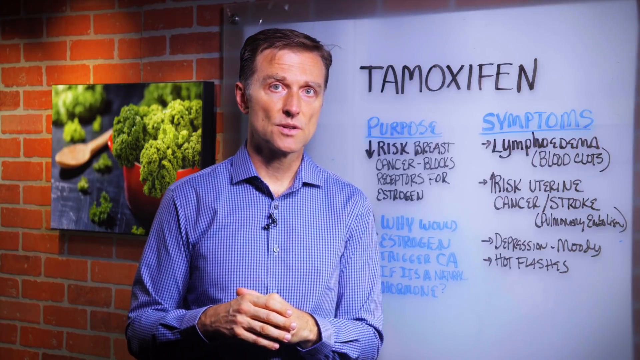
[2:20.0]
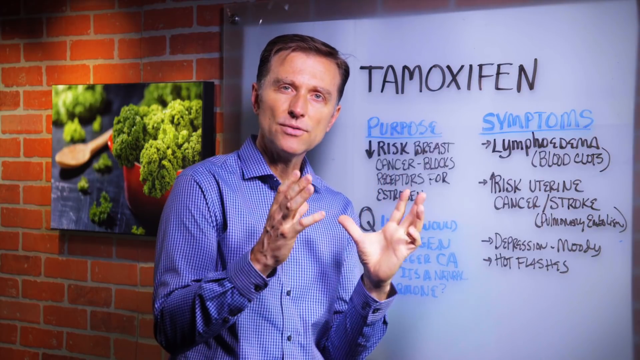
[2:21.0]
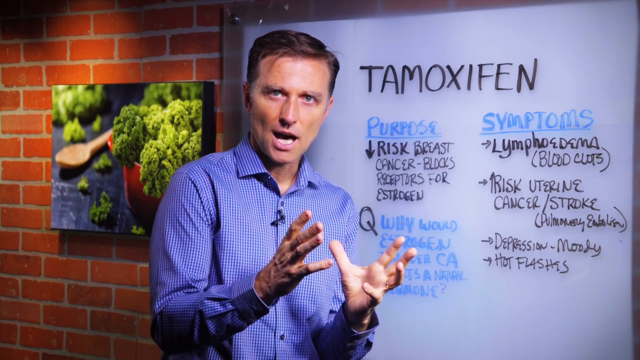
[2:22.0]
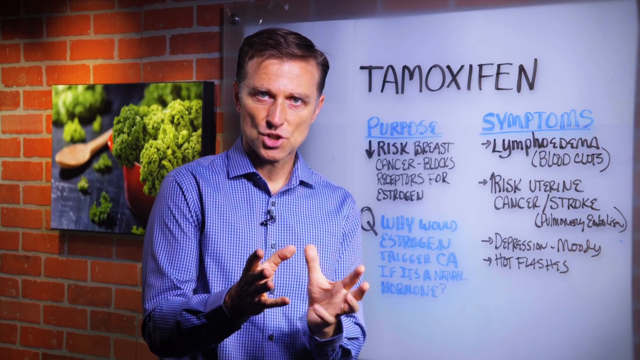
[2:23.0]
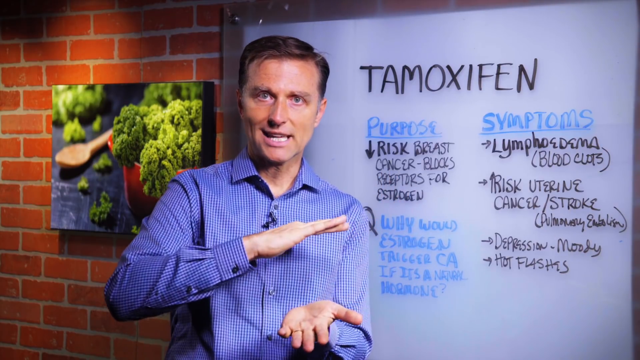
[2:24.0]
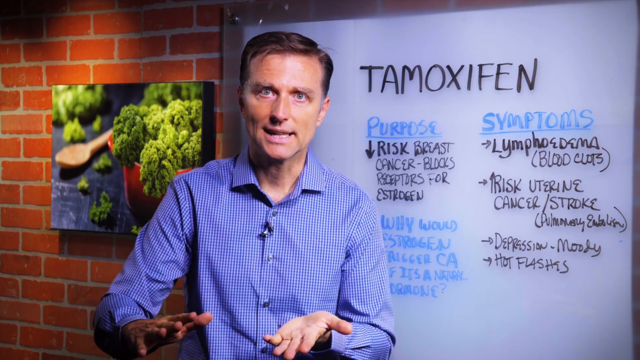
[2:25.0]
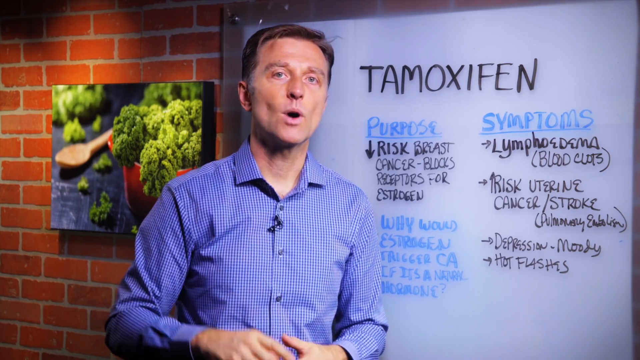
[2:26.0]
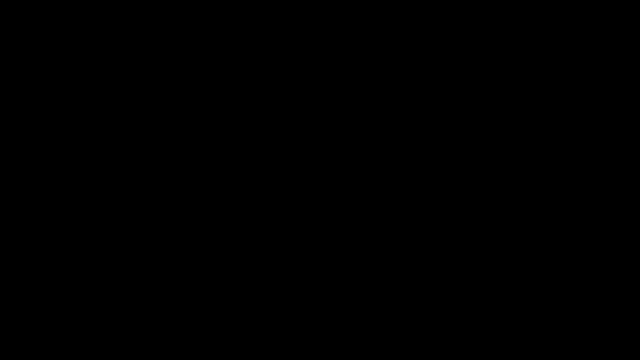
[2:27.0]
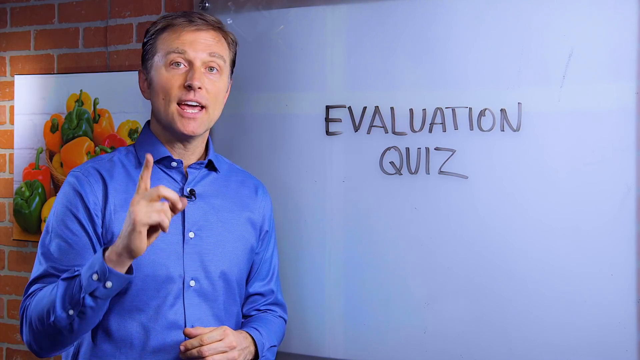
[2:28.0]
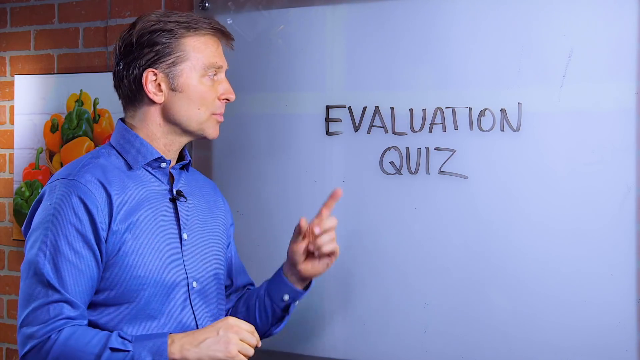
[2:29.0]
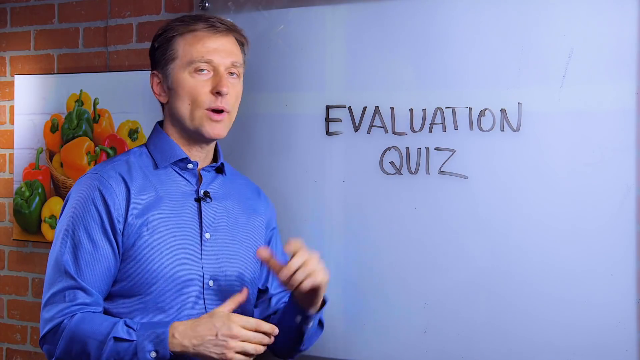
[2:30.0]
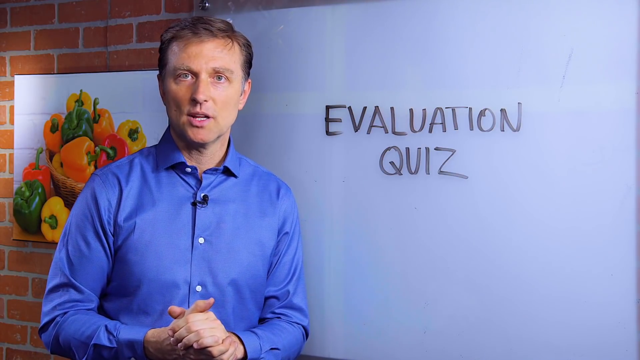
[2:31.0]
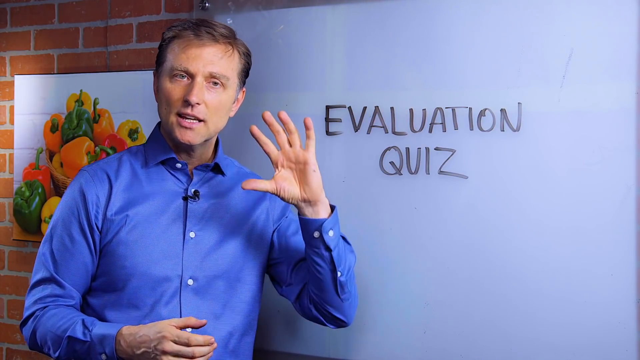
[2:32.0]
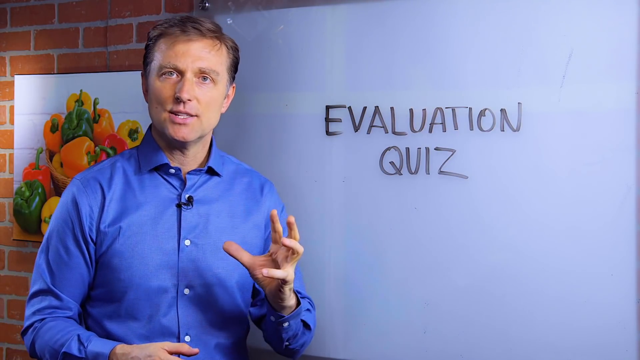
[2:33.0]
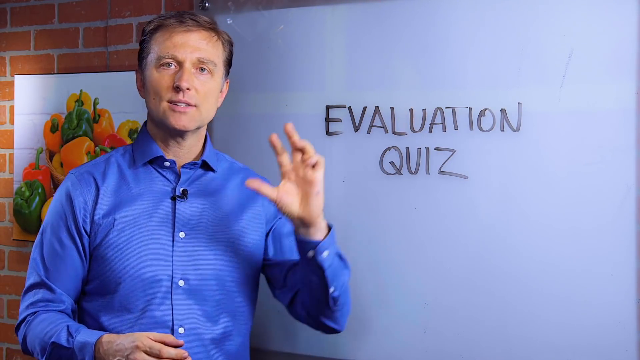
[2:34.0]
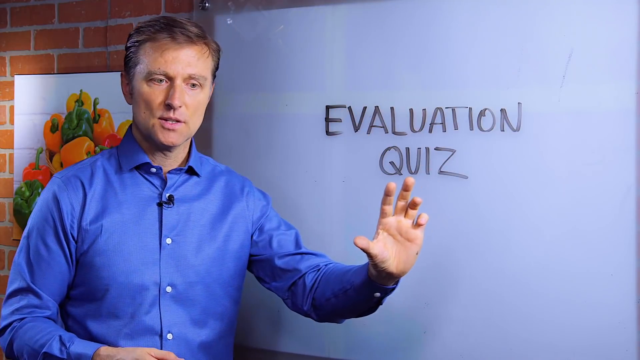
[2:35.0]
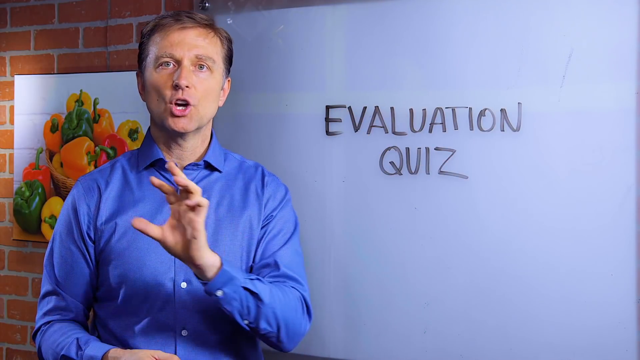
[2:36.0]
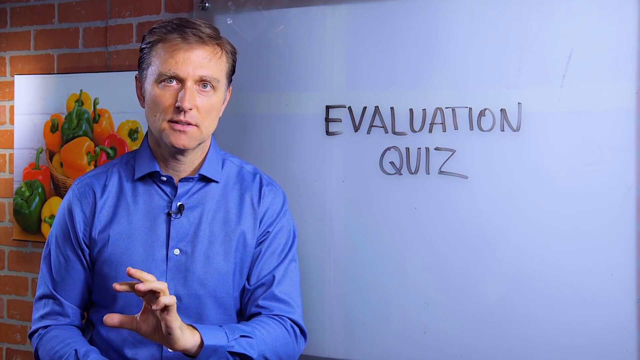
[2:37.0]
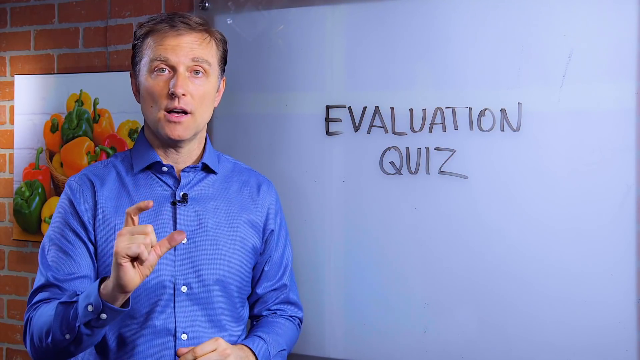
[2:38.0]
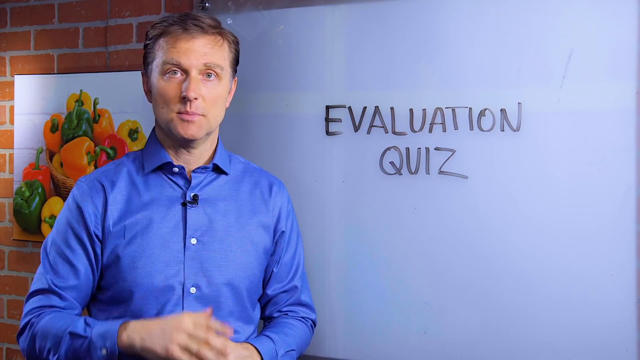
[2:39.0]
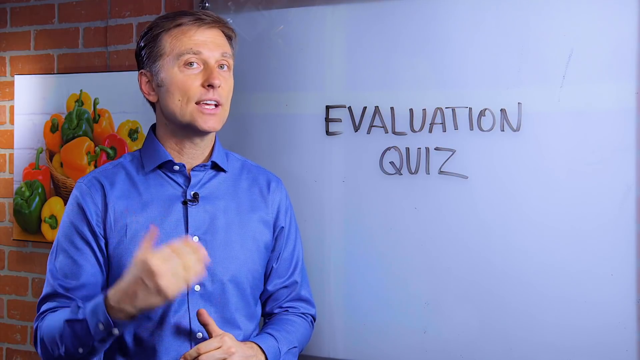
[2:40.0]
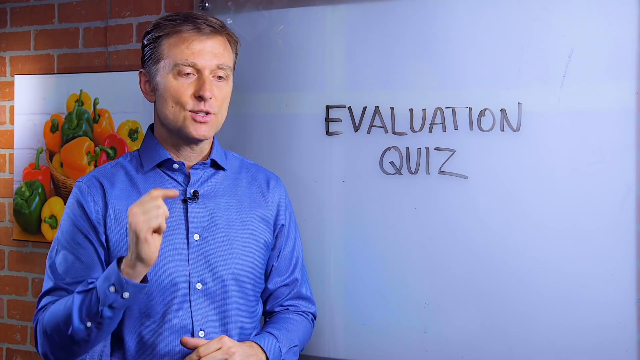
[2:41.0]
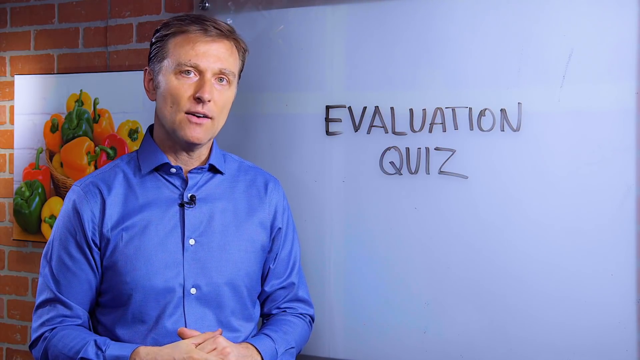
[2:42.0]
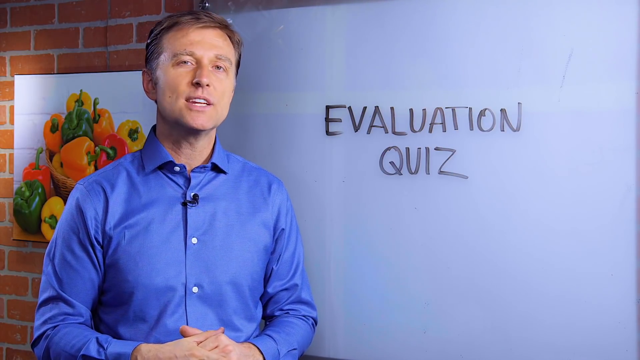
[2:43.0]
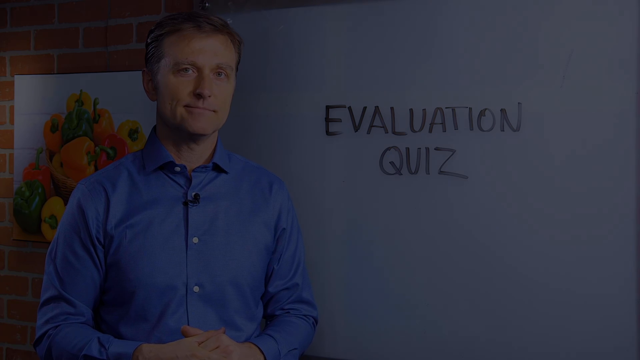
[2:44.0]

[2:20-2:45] A white man stands in front of a whiteboard that says "tamoxifen". He looks slightly tanned and has very short, clean-cut brown hair parted on his left, gray sideburns, and eyes that look blue or maybe hazel. The board says "purpose, reduce risk breast cancer blocks receptors for estrogen", "question, why would estrogen trigger CA if it's a normal hormone?" and "symptoms, lymphedema, blood clots, increased risk, uterine cancer / stroke, pulmonary embolism, depression, moody, hot flashes". To the left behind him is a brick wall with a photo of broccoli spilling out of an orange container like a Dutch oven or casserole dish, and a wooden spoon. He uses his hands as he talks, showing with the flat of his hand that something is finished. Then the whiteboard says "evaluation quiz", and he motions with his hand again.